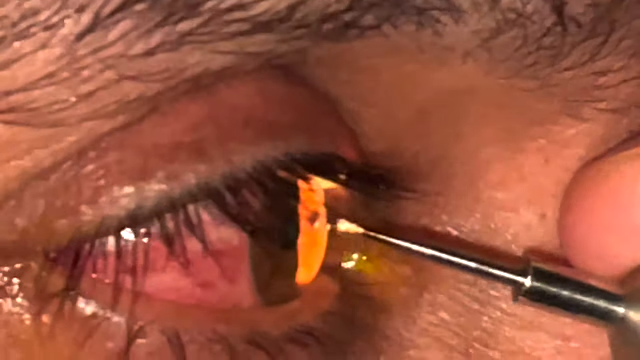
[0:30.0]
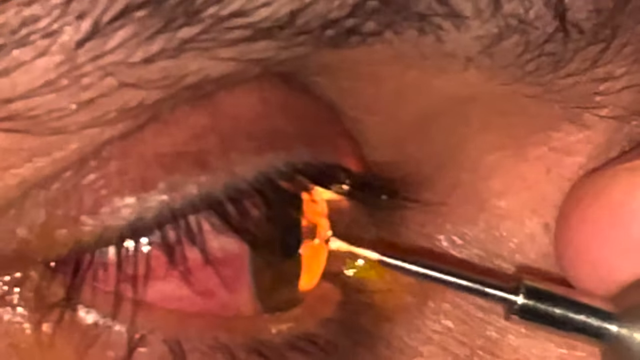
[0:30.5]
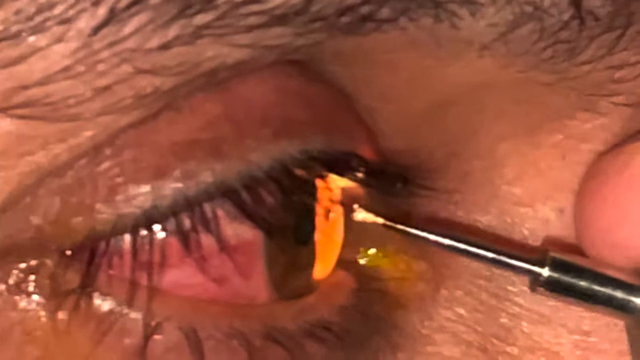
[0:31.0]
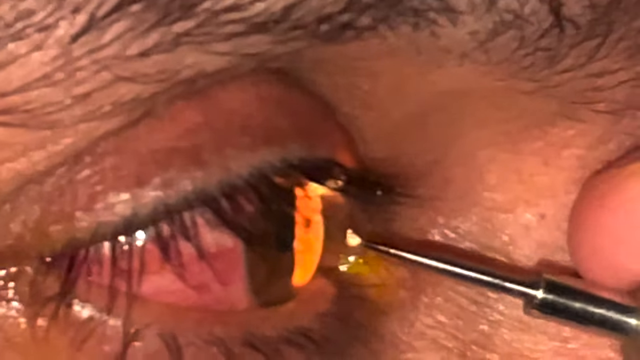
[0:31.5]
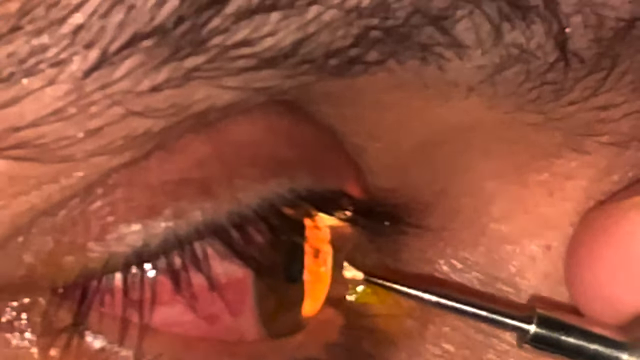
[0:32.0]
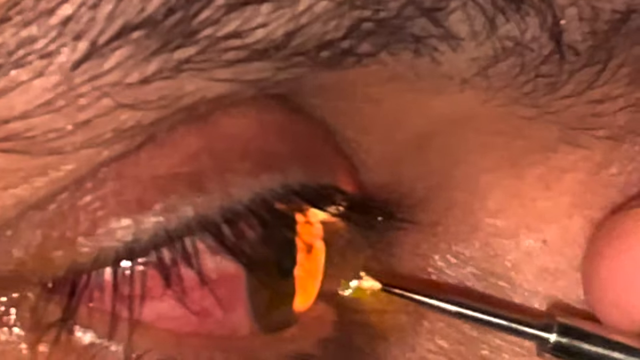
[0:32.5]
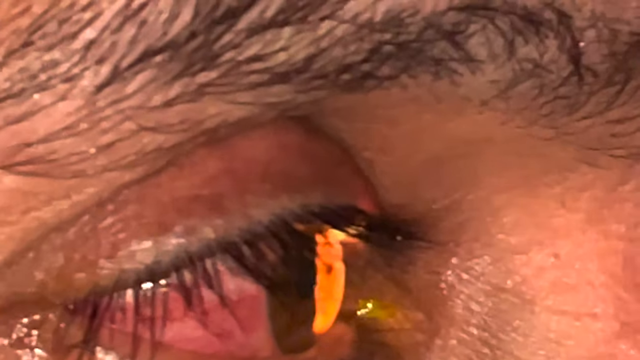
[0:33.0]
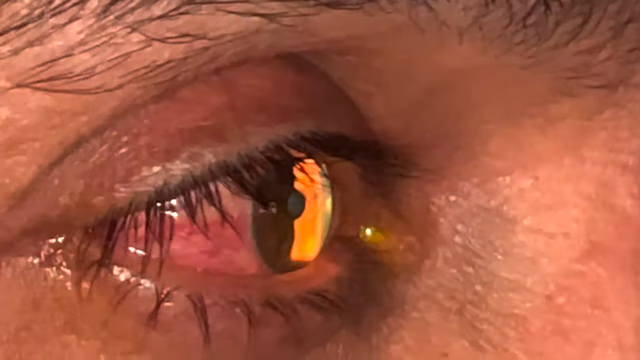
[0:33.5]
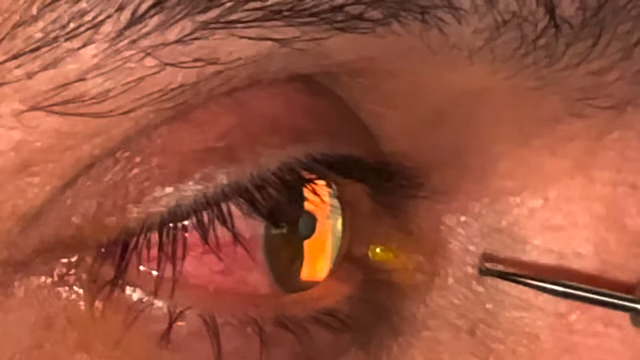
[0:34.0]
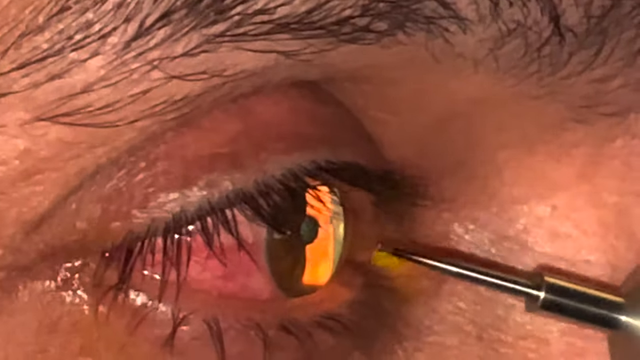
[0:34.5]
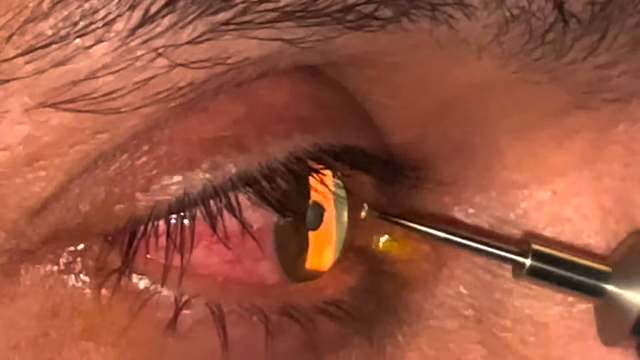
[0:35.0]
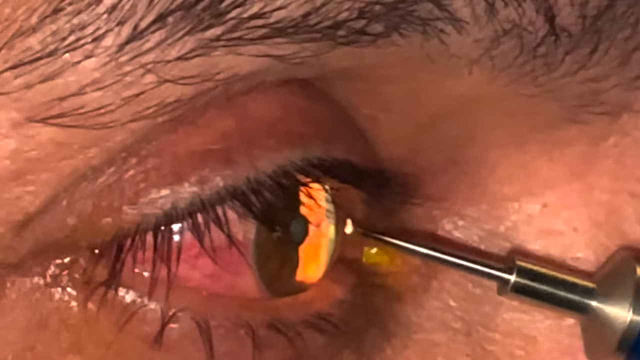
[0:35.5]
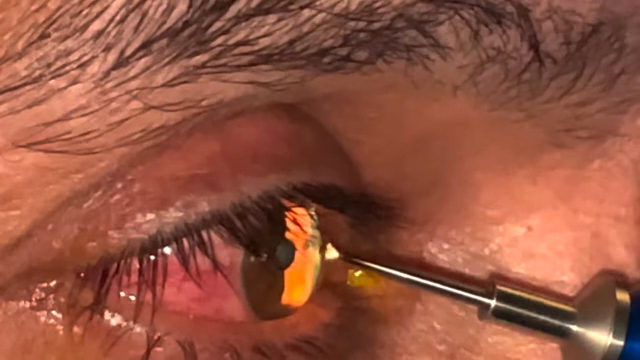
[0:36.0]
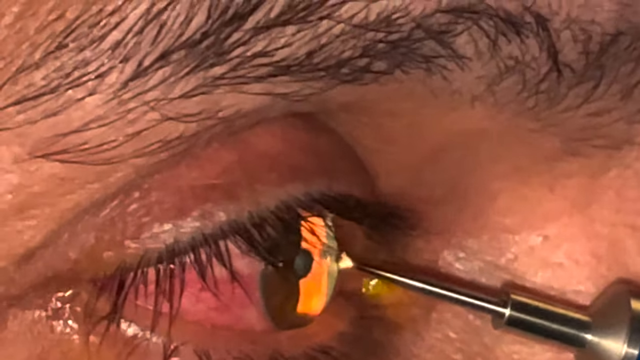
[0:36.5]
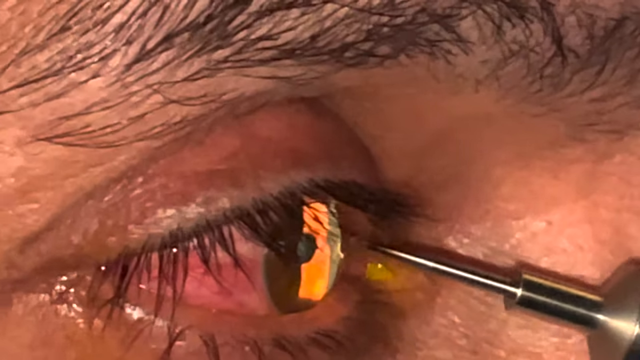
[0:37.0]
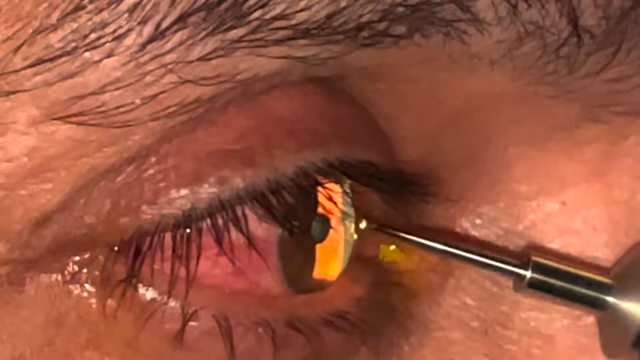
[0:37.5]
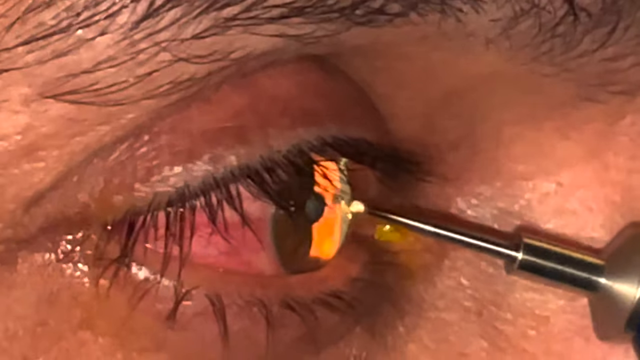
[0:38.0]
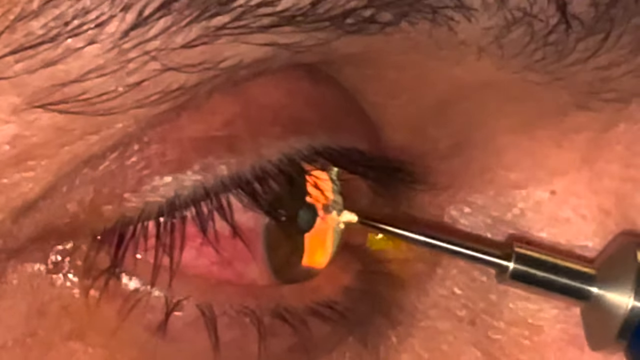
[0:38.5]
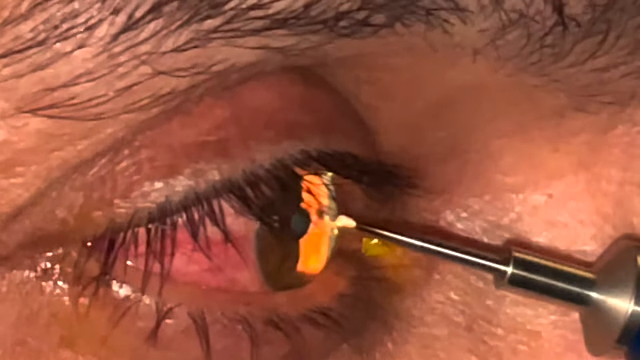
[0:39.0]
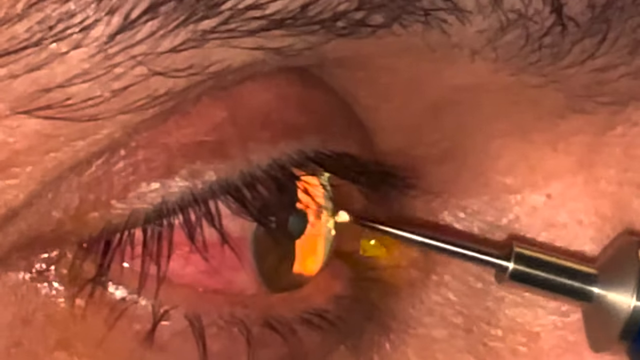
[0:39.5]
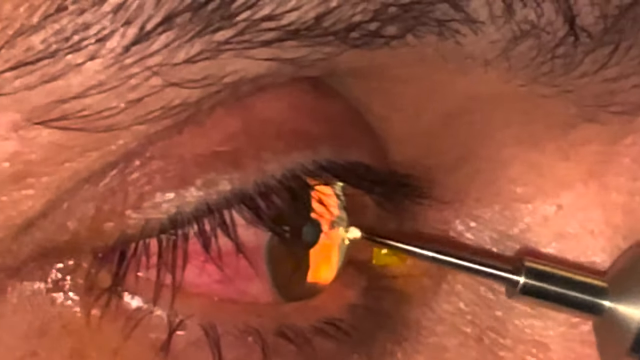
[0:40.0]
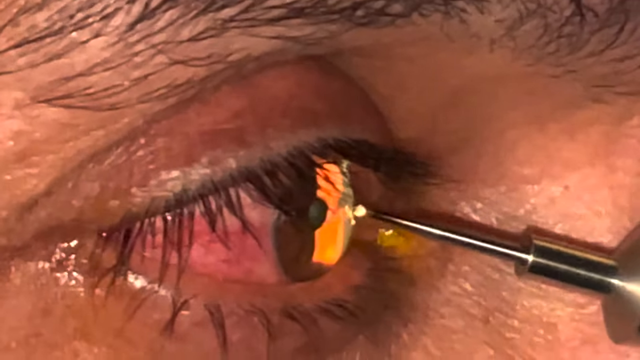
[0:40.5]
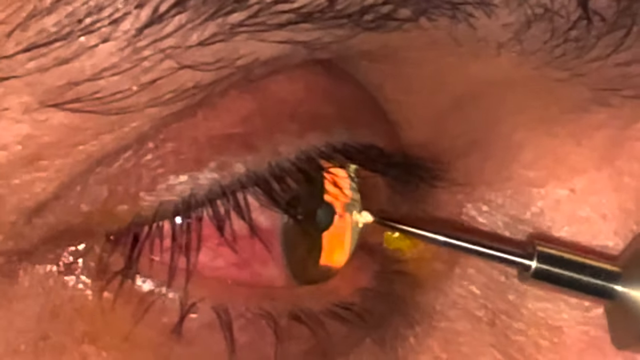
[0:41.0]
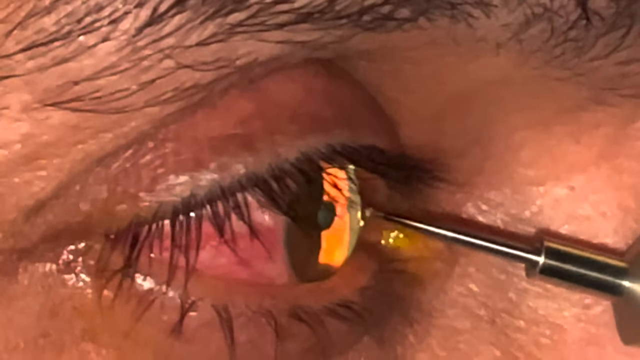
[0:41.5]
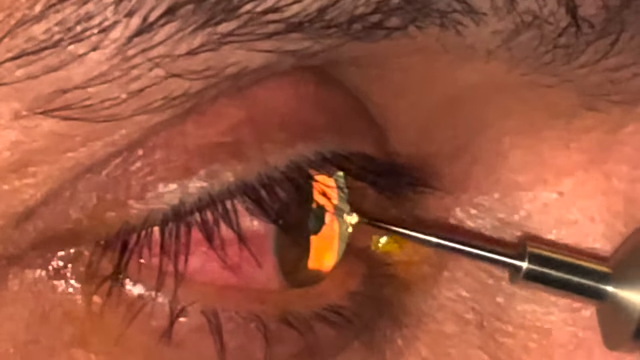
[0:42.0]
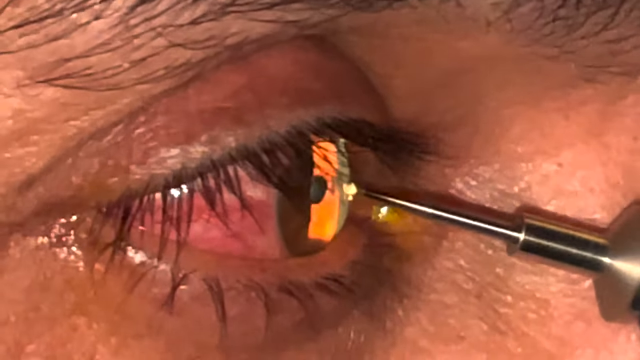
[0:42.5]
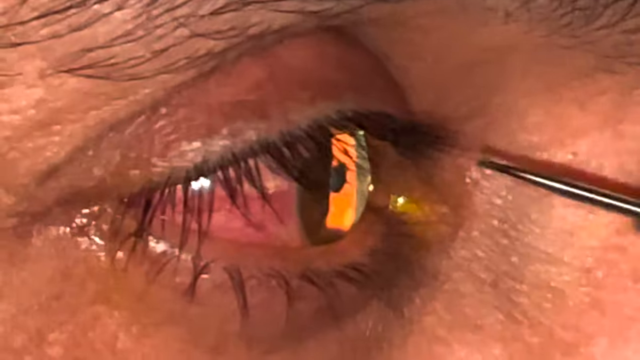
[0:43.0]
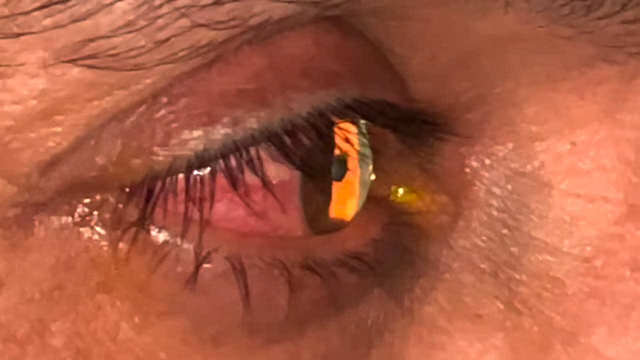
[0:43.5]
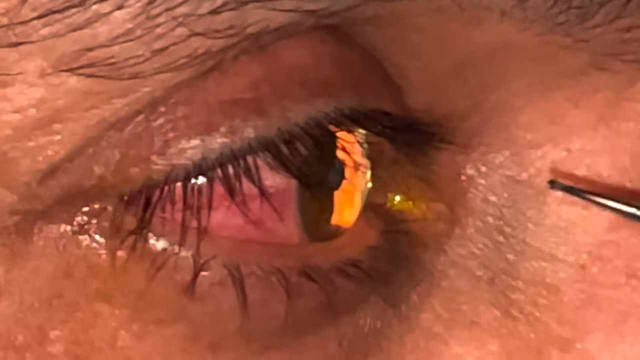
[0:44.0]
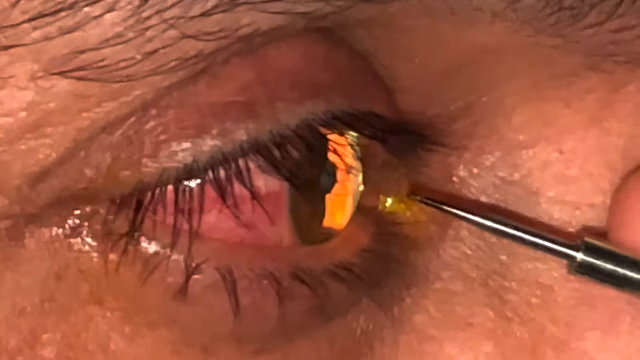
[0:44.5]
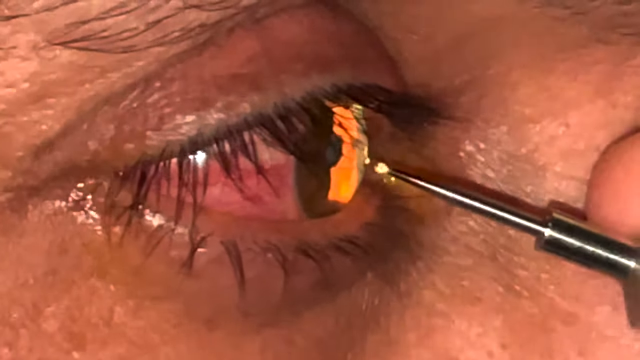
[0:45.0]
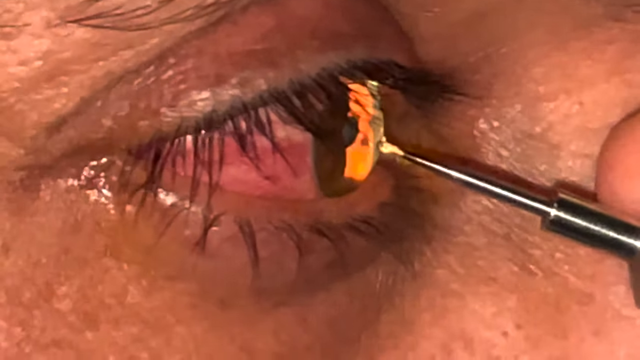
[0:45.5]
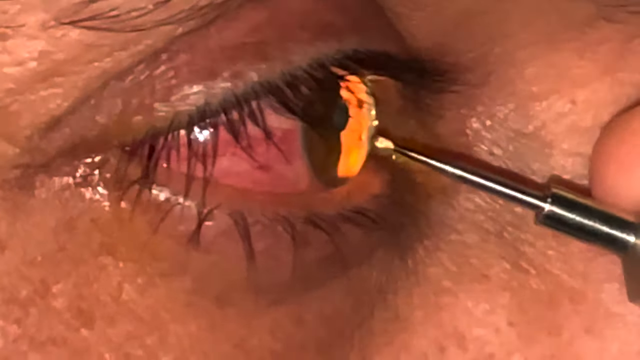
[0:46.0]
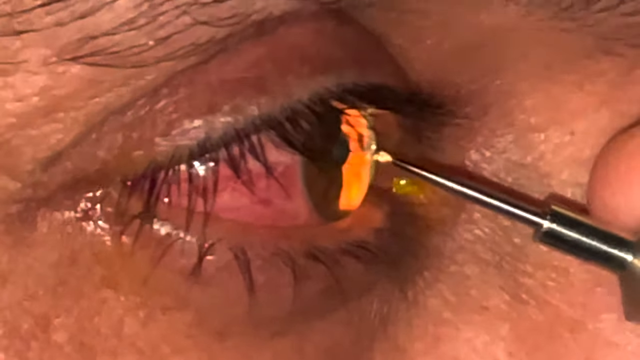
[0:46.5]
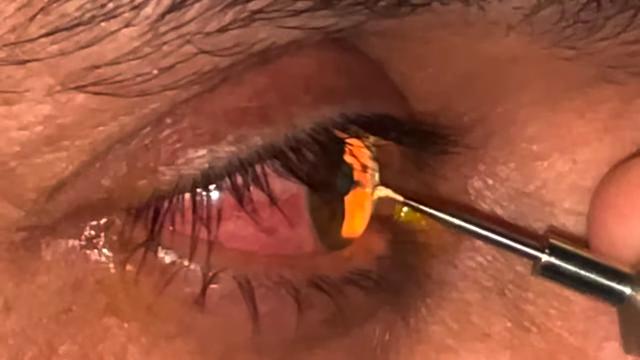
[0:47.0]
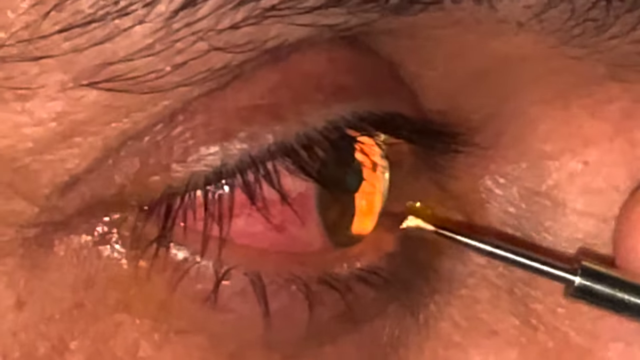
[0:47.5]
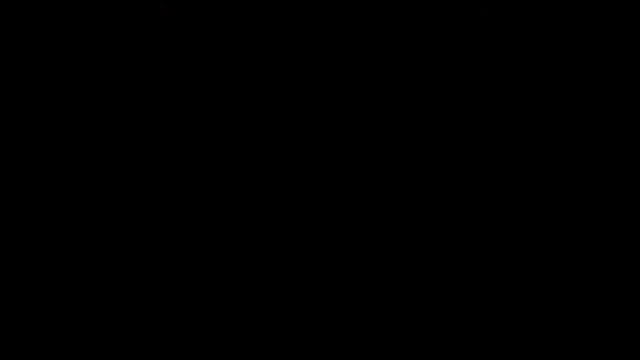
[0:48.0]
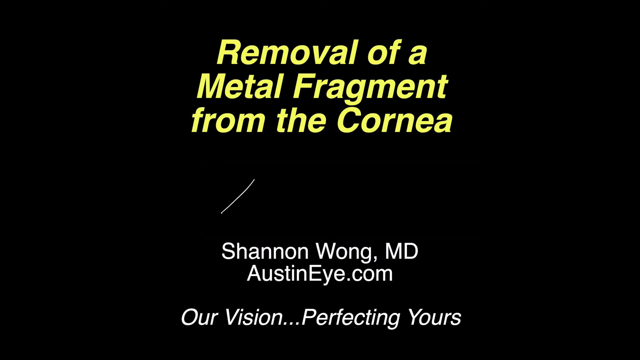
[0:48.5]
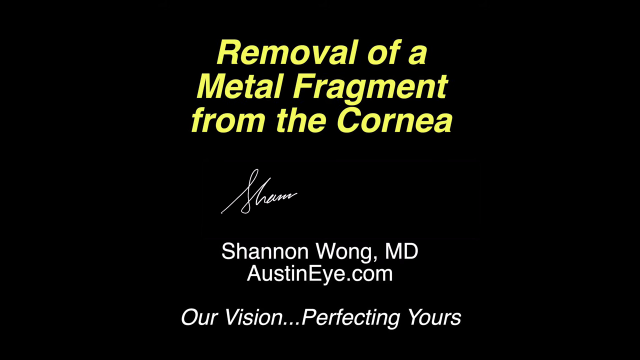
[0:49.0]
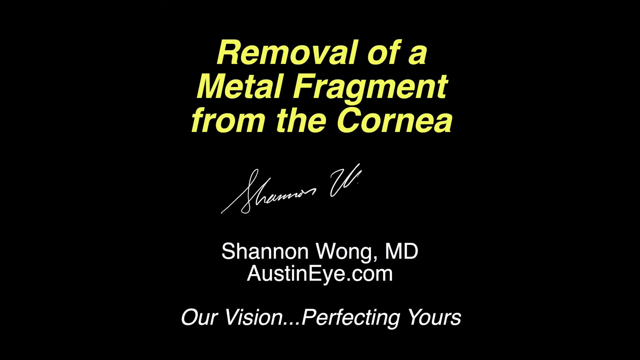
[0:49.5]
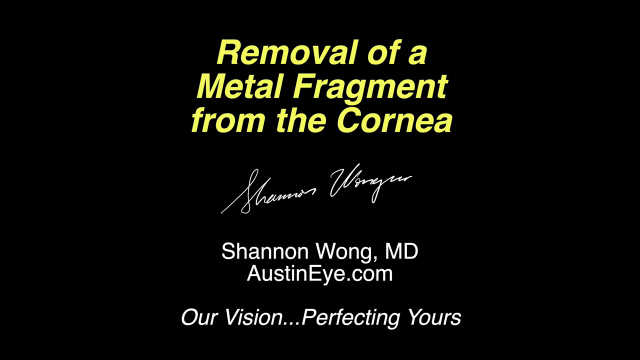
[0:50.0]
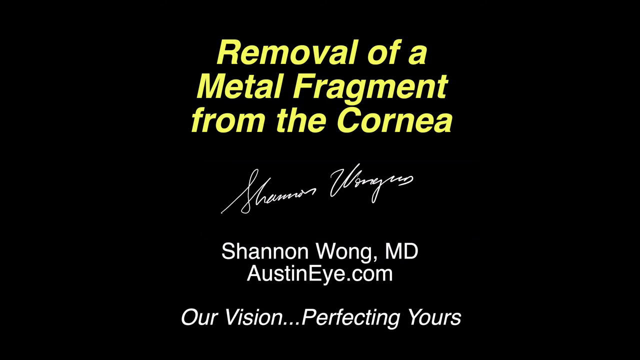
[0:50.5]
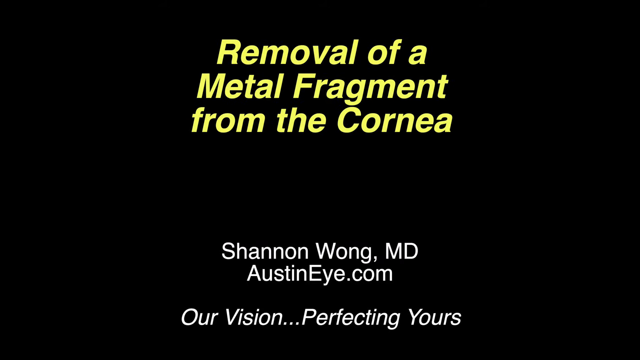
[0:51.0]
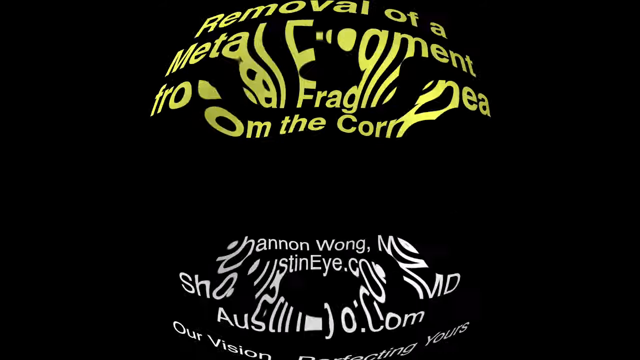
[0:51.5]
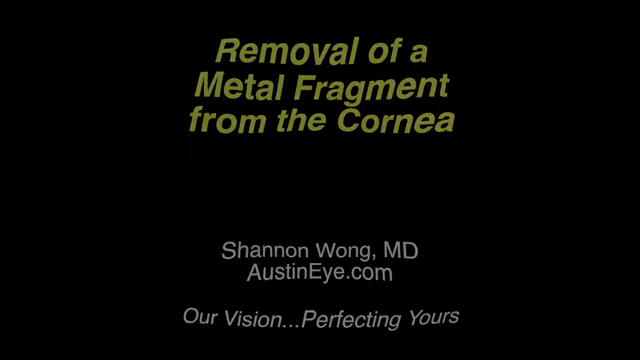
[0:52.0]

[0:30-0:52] A very zoomed-in side profile of a person shows the eye up close, including the outer part of the eye, the eyebrows and the eyelashes. A procedure is being done on the patient, apparently to remove an iron metal form body from the corner of the eye. The instrument used is a very slender metal tool that looks similar to a pen, with a very slender tip. A small flame of some type is produced from the tip of the instrument, and the tip touches the patient's eye, moving in and out and very gently touching it. The video then cuts to a black background with yellow text reading "removal of a metal fragment from the corner." Below it is a person's signature, and underneath the signature is the name "Shannon Wong, MD, austineye.com."